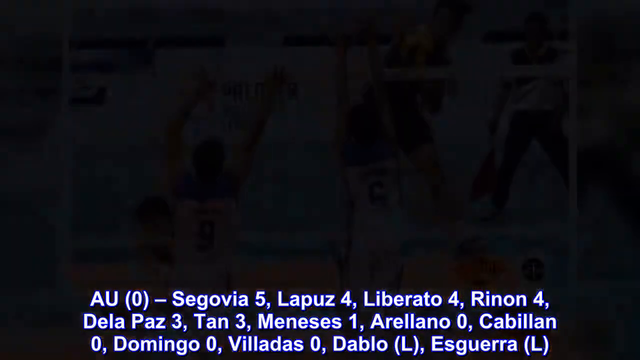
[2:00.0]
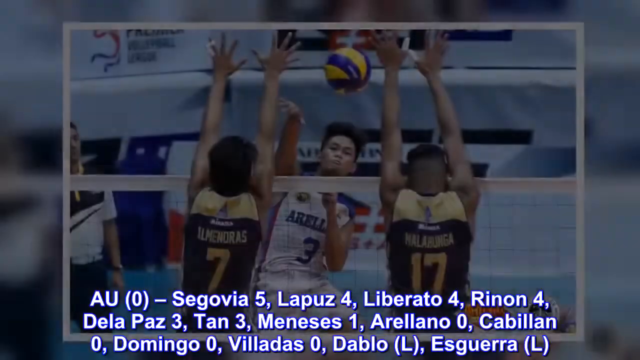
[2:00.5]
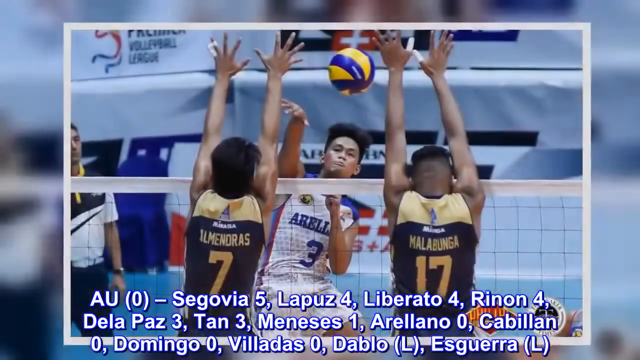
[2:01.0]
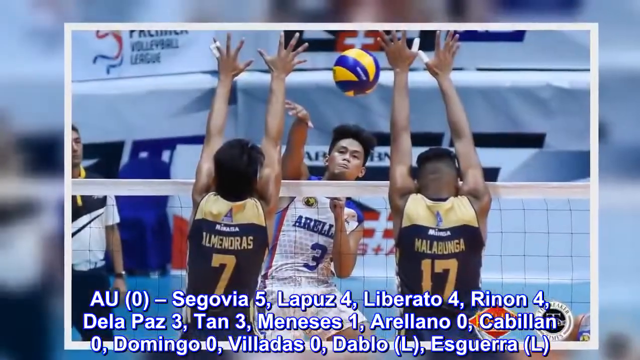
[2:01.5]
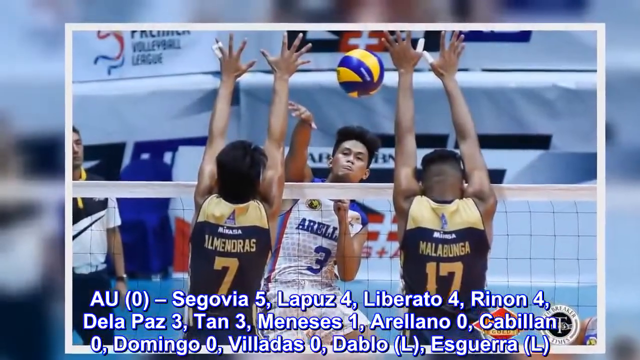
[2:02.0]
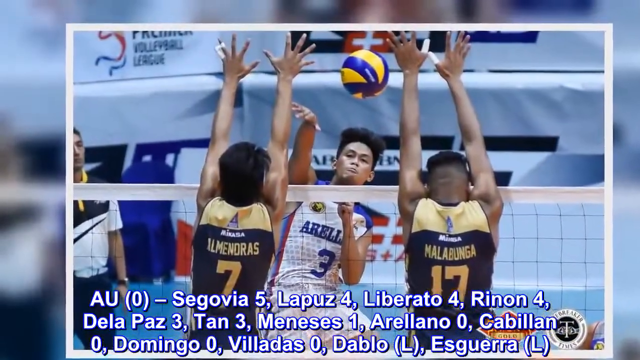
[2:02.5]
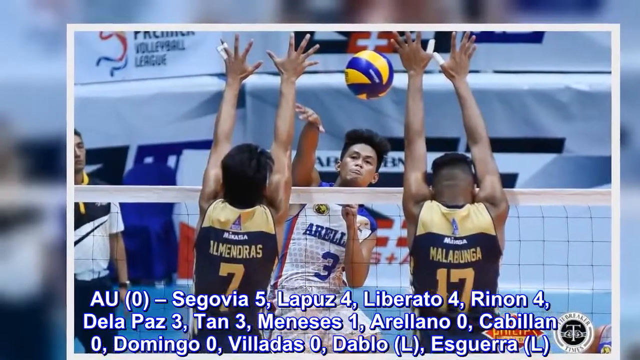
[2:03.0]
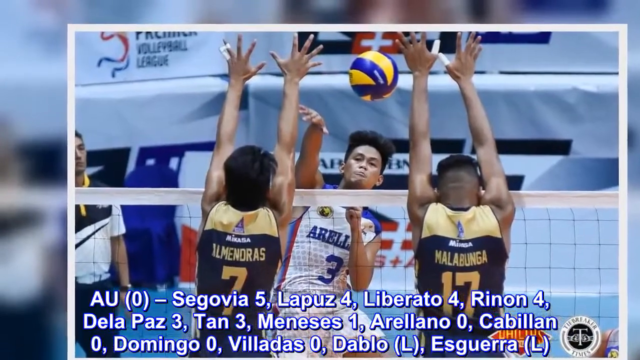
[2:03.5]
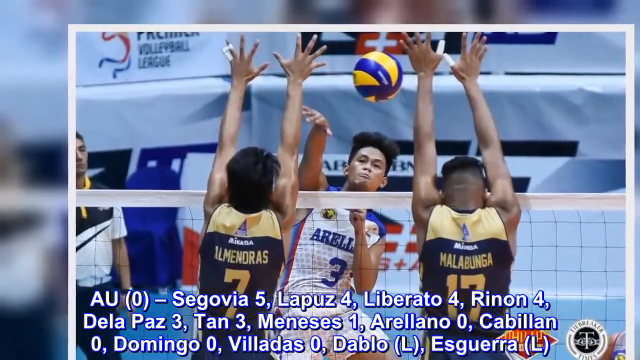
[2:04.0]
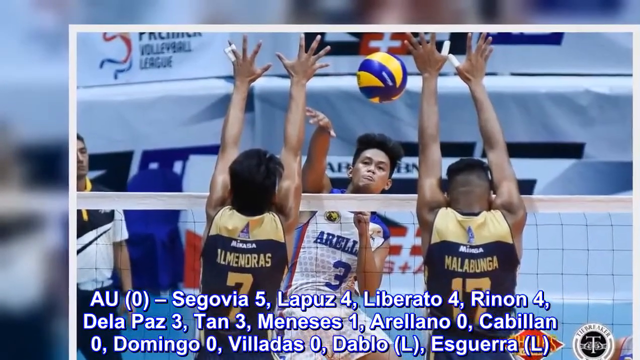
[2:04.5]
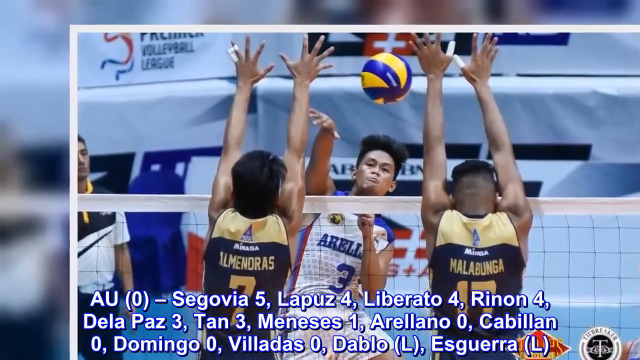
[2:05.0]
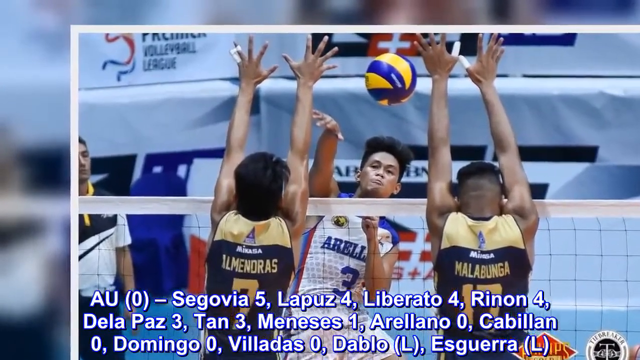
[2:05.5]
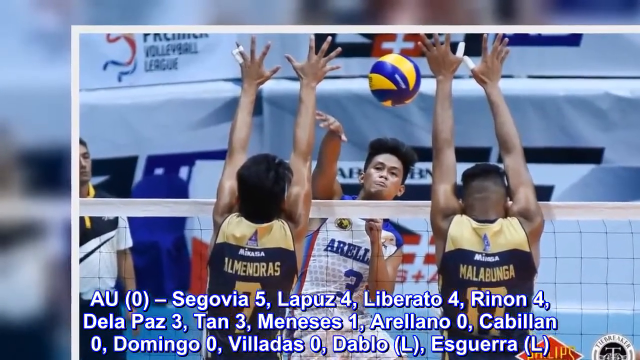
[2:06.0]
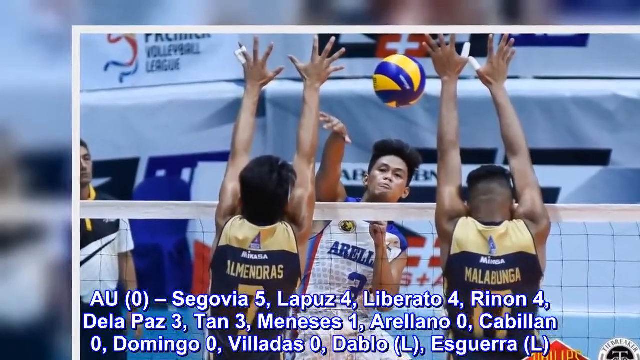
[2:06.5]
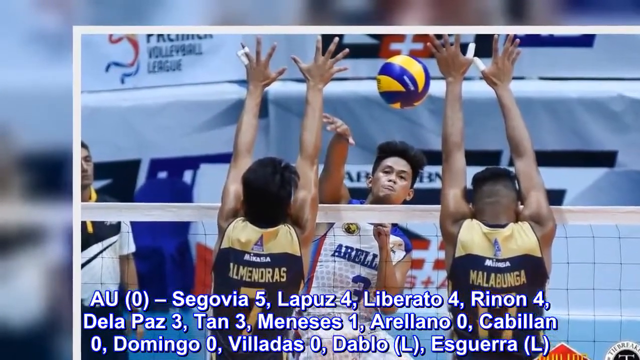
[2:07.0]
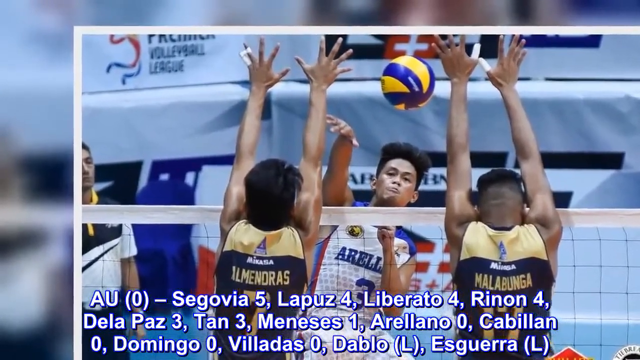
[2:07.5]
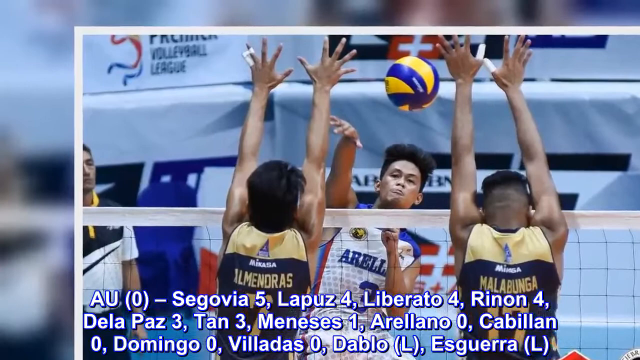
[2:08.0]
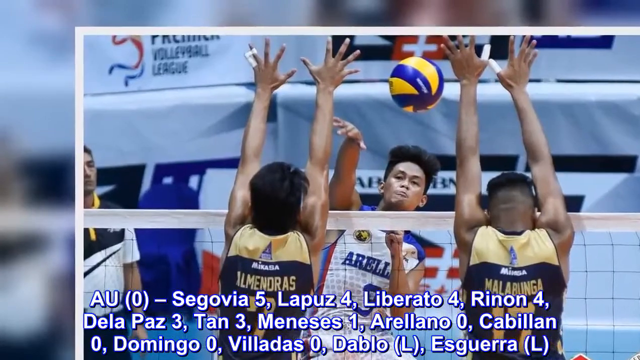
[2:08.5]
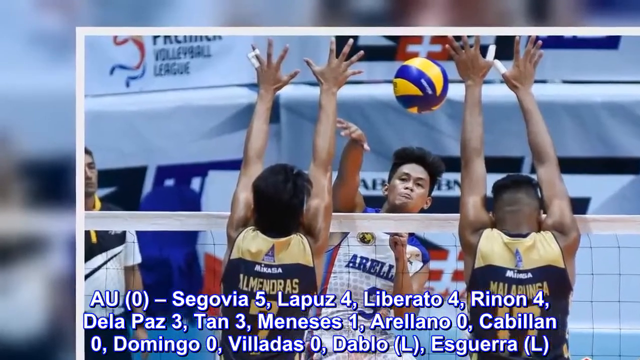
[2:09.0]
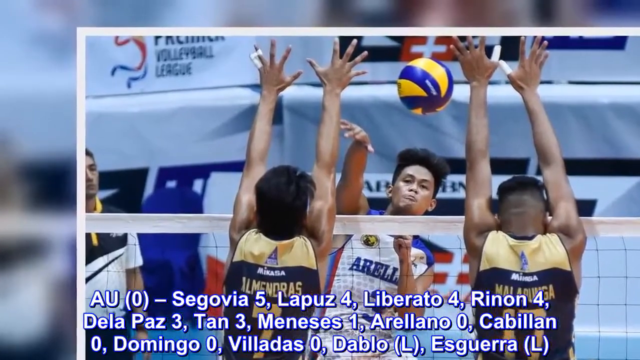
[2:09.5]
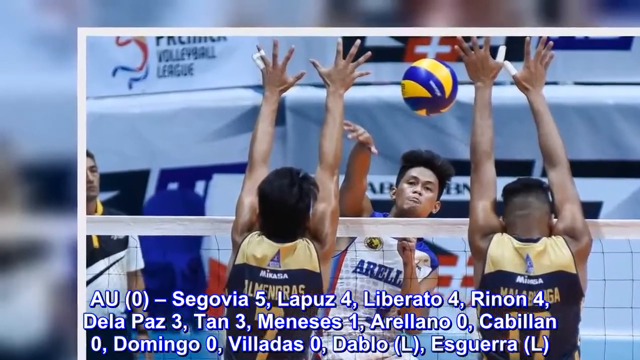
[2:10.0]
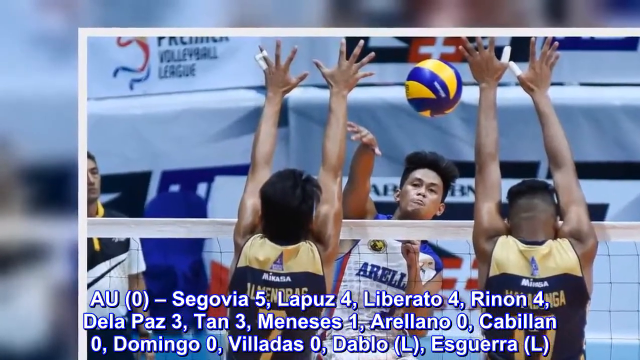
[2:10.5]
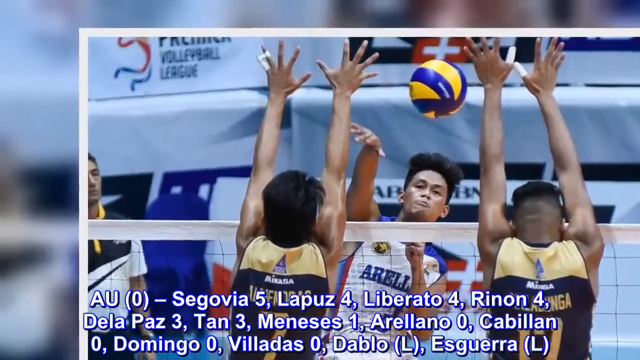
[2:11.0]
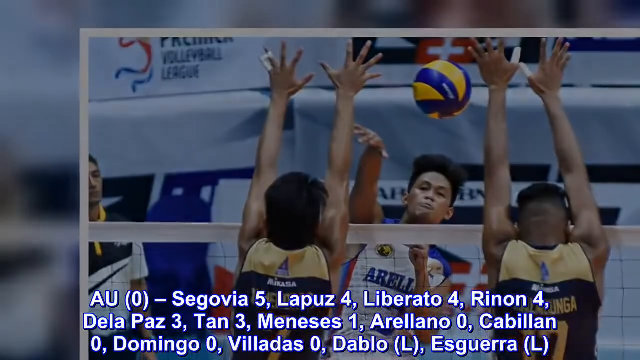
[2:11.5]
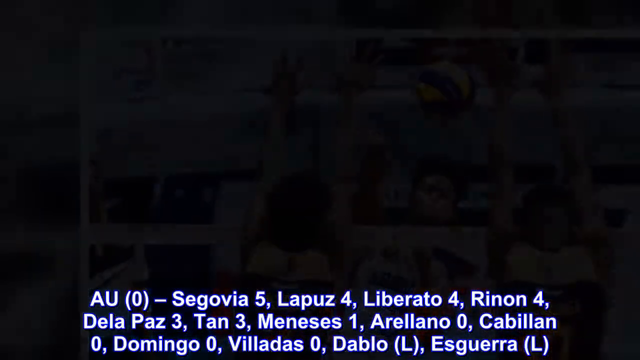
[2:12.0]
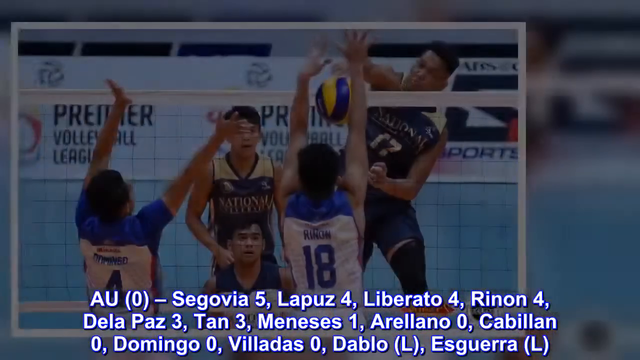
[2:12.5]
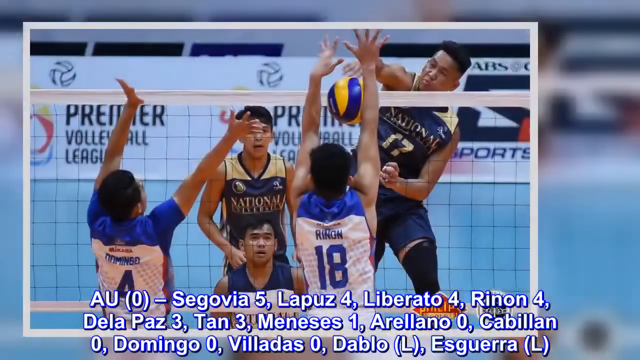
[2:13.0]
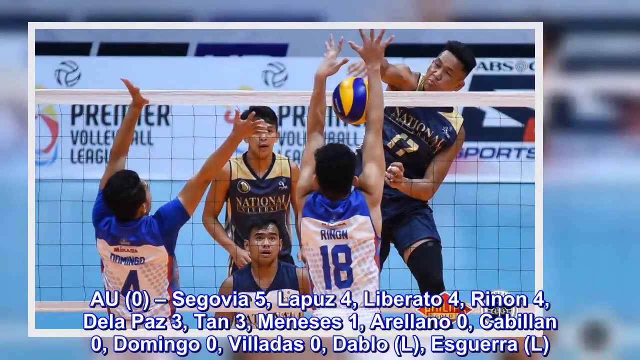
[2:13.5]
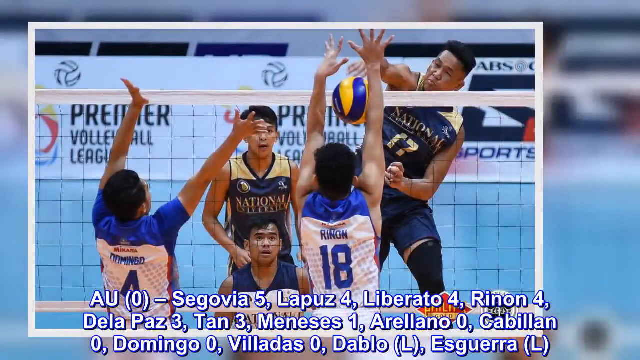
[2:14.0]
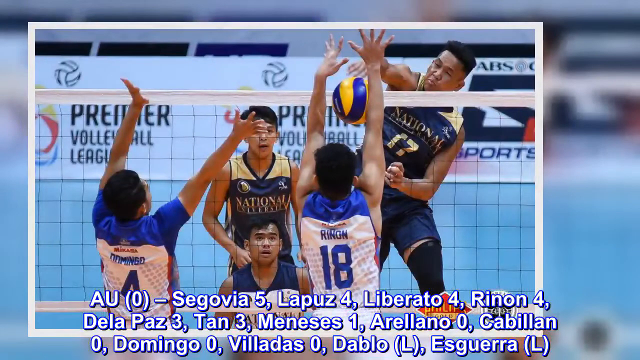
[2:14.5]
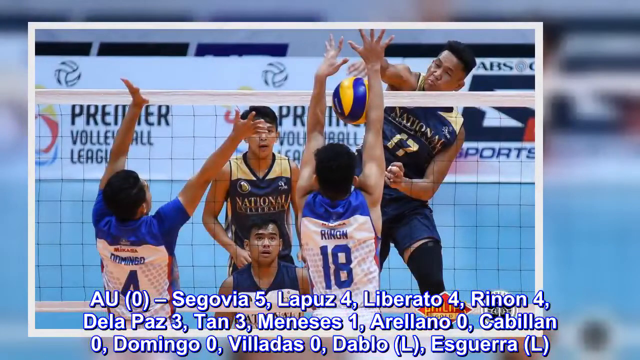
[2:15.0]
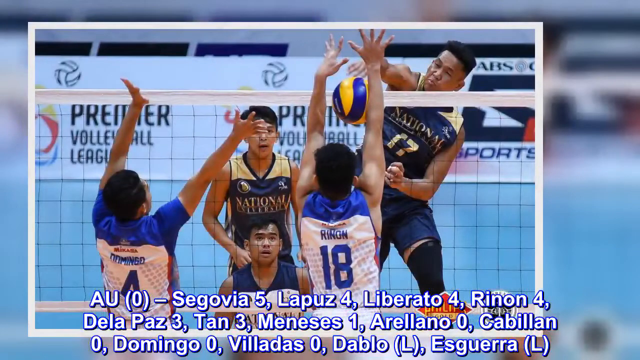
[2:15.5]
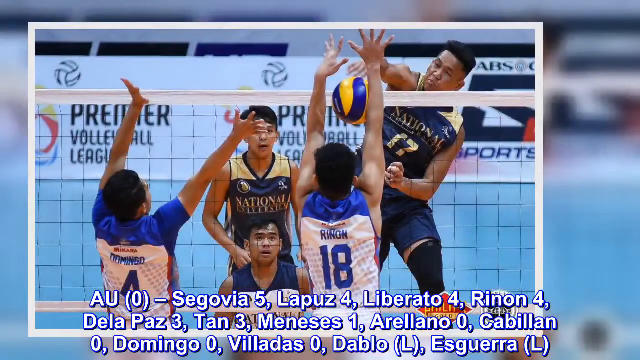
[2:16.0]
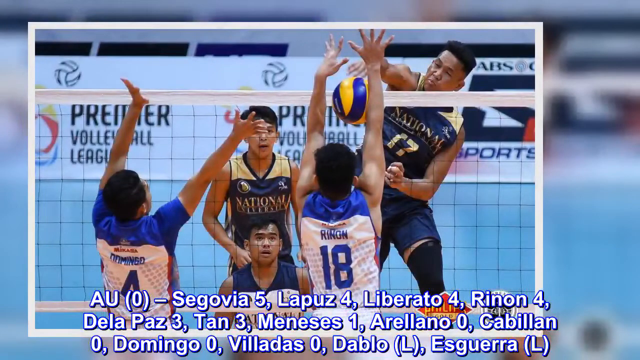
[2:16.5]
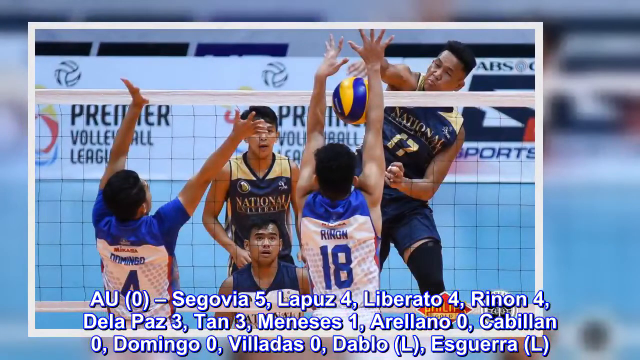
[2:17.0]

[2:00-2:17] The Premier Volleyball League Collegiate Conference match between the National University Bulldogs, in black and gold uniforms, and the R-Leno University Chiefs, in blue and white uniforms, nears its end. The scoring for Arleno is shown: Sogova five, Lopuz four, Liberato four, Rhinon four, Delapazza three, Tan three, Manis one. At the end, a picture shows two defenders.